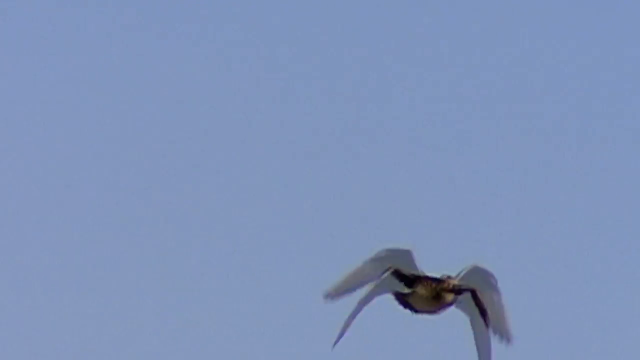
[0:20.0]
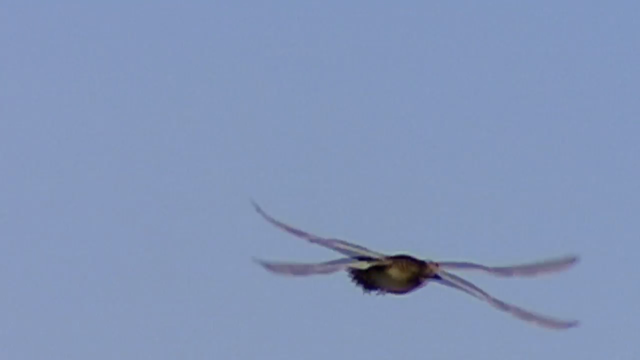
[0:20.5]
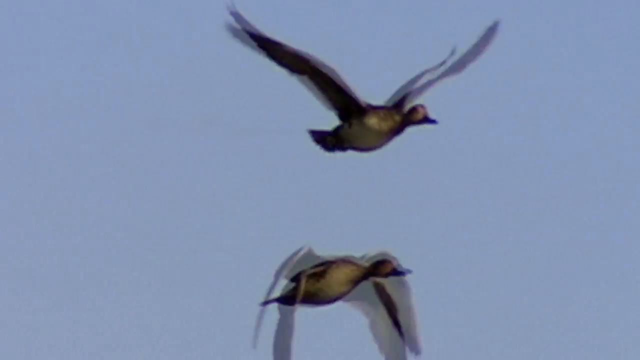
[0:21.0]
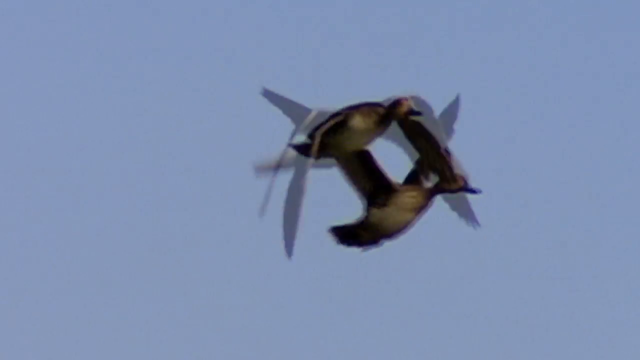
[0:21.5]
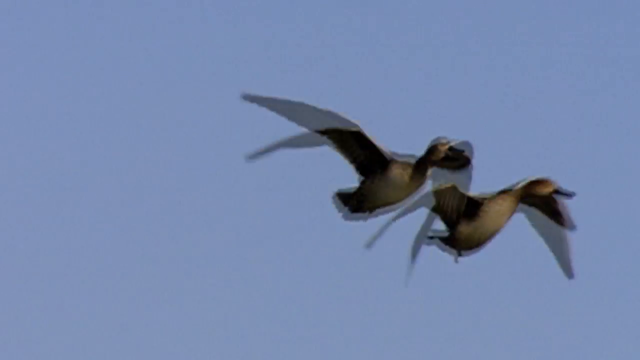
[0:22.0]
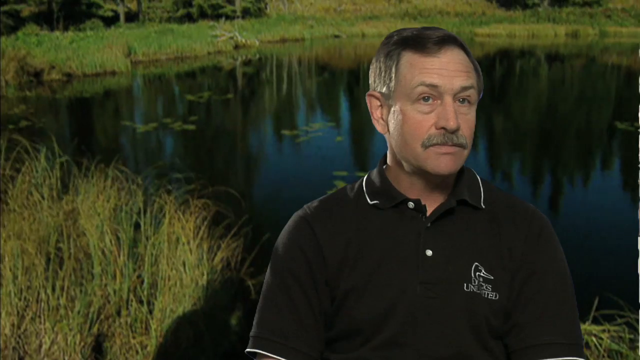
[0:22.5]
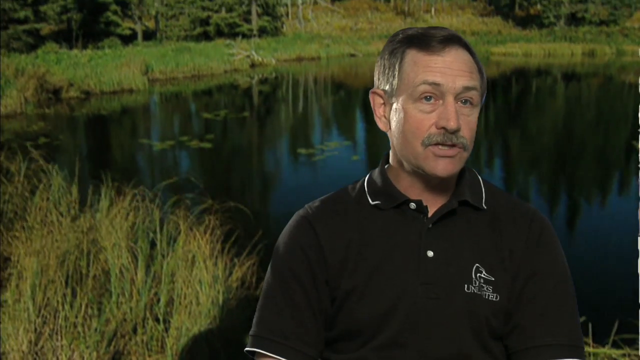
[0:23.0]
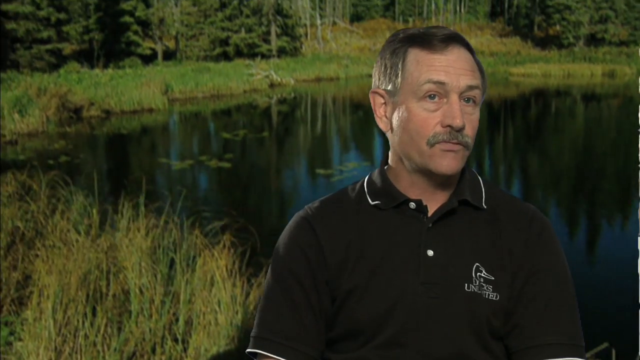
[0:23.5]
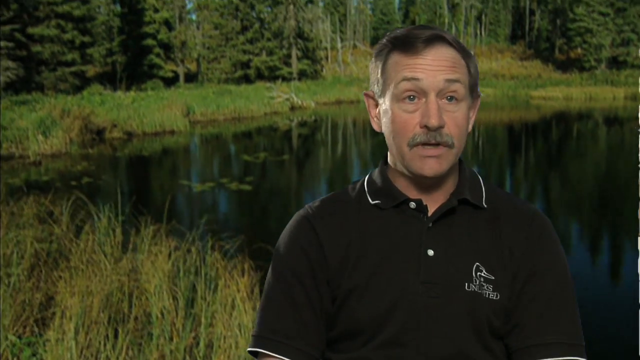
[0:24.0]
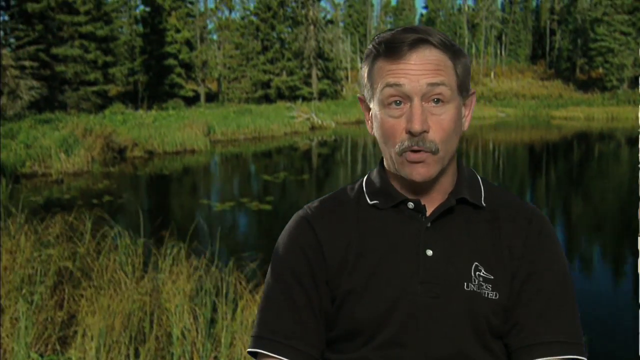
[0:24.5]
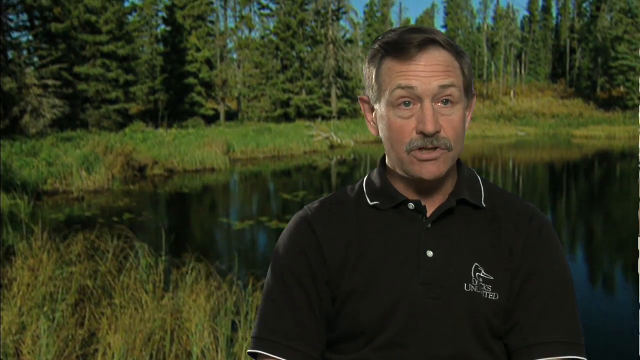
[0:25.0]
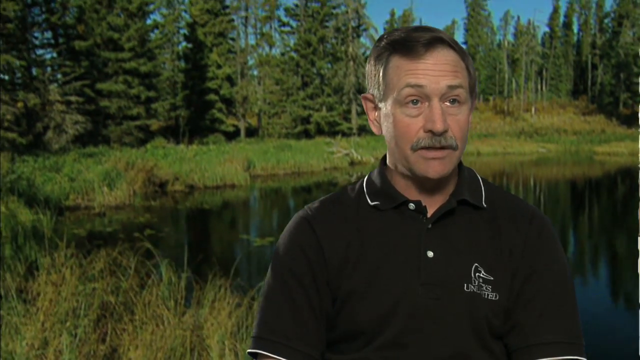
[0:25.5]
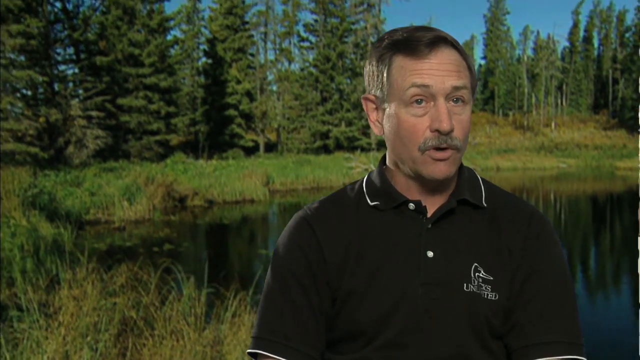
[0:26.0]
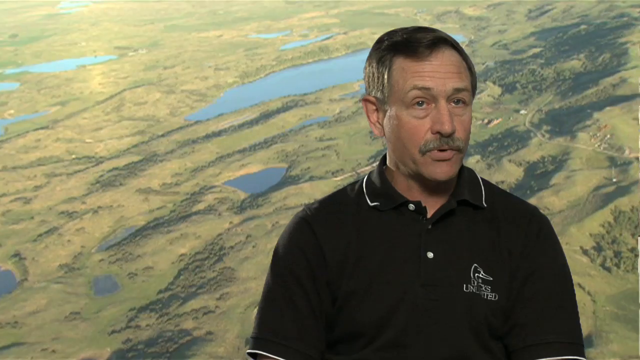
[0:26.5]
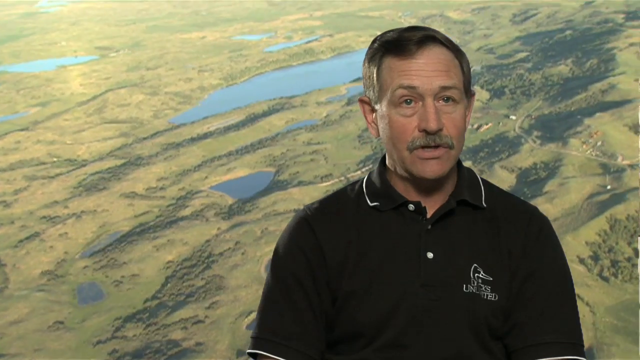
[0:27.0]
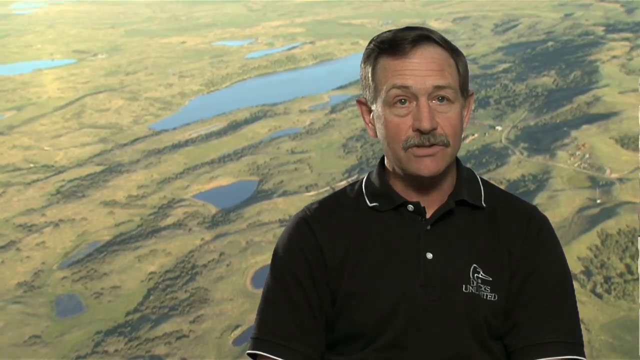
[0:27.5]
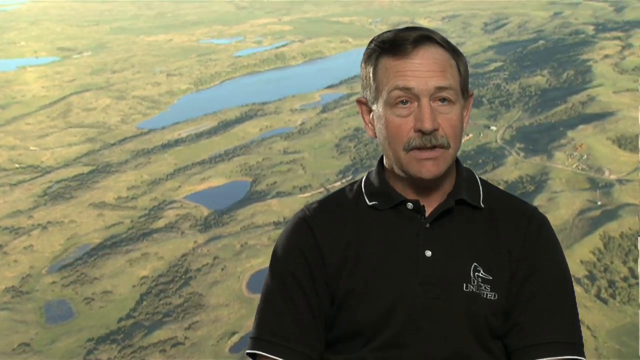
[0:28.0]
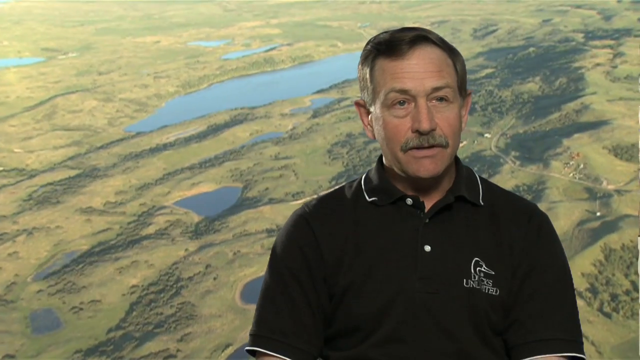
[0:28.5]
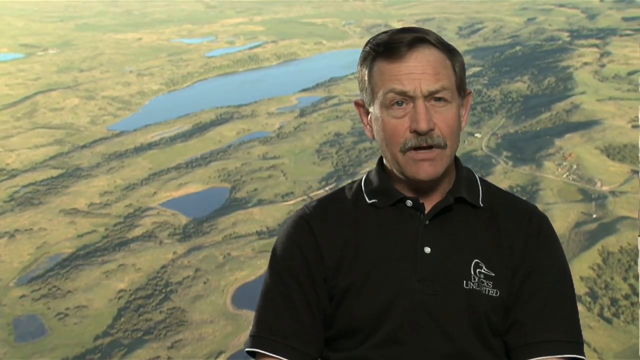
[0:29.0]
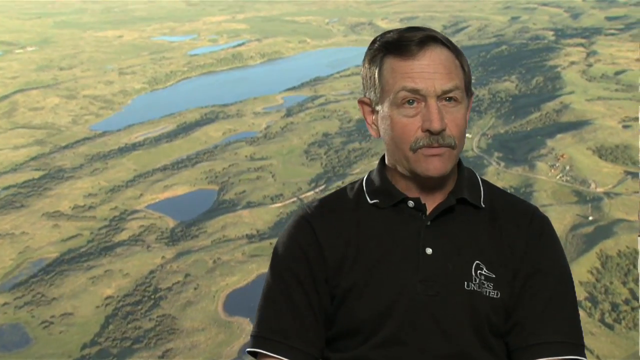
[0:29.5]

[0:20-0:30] A picture of a marsh surrounded by lush green forests fills the background, overlapped with the man in the black Ducks Unlimited polo, who speaks directly at the camera. The camera then turns, or the background changes, to a bird's-eye view of what looks like a valley of some sort with ponds scattered throughout. A larger body of water is toward the upper left-middle of the screen, and five smaller ponds are scattered in the same area. The camera begins to shake, as if possibly filmed from a helicopter.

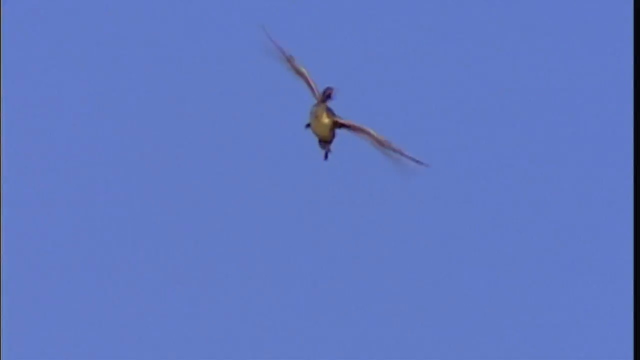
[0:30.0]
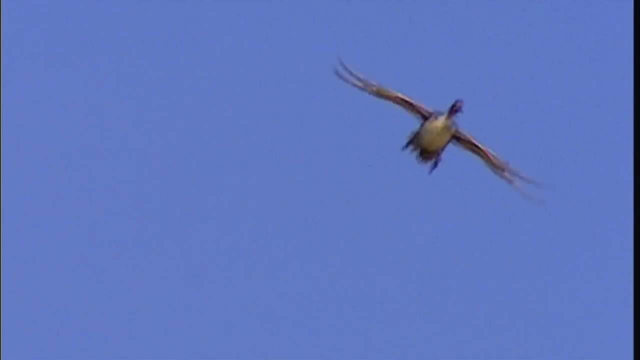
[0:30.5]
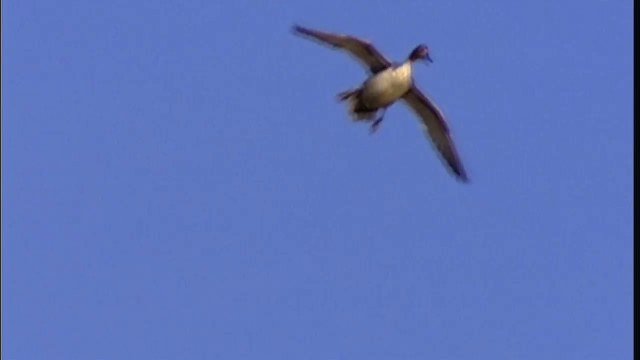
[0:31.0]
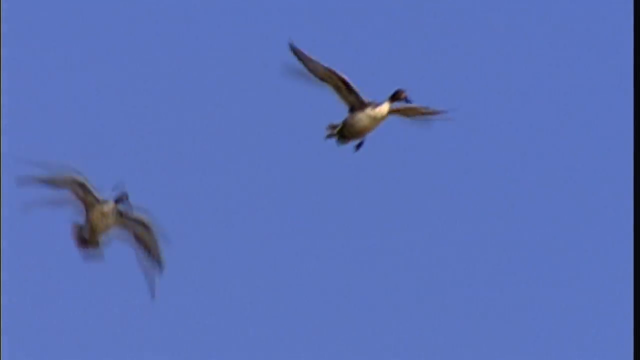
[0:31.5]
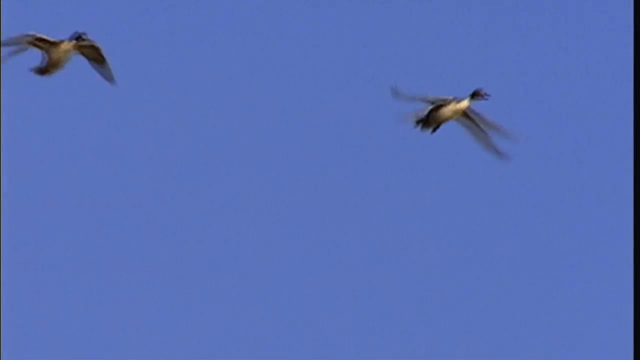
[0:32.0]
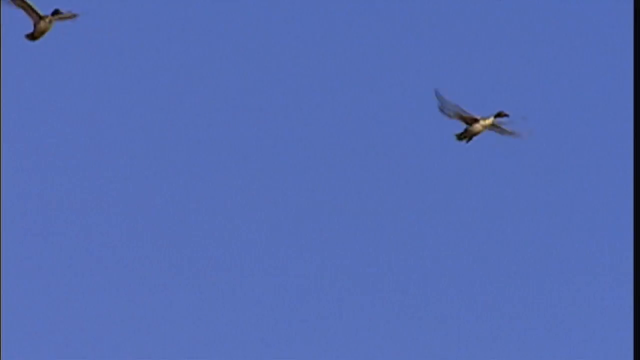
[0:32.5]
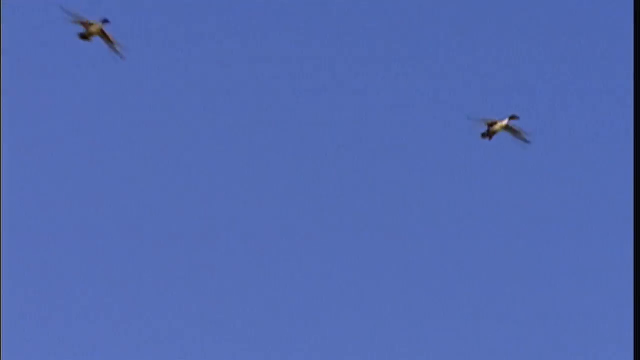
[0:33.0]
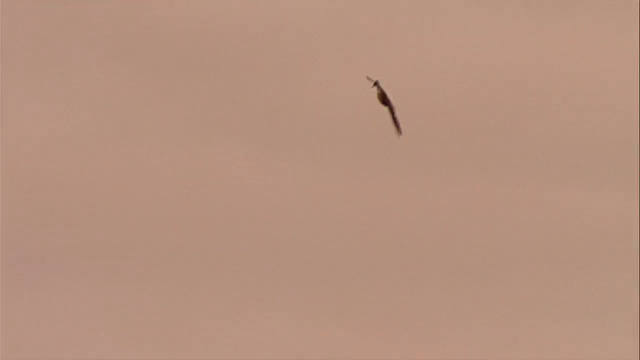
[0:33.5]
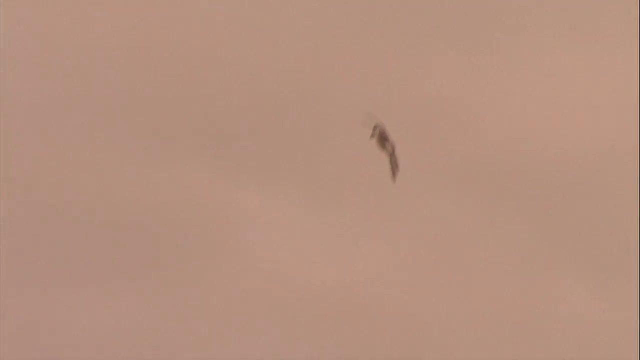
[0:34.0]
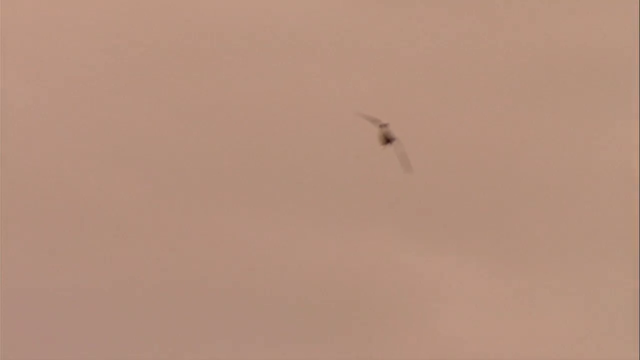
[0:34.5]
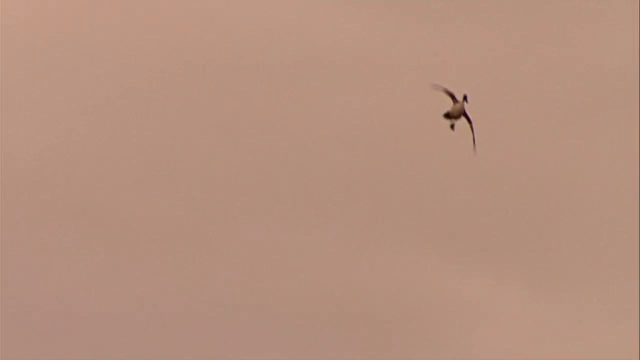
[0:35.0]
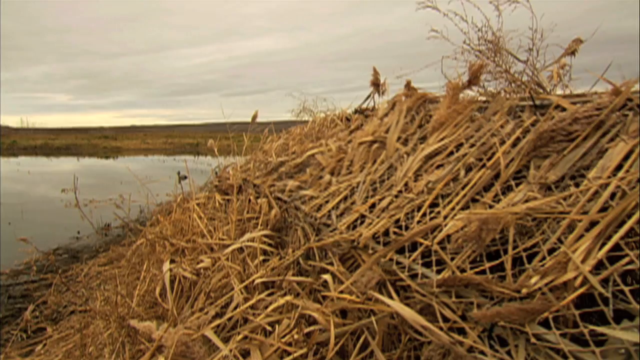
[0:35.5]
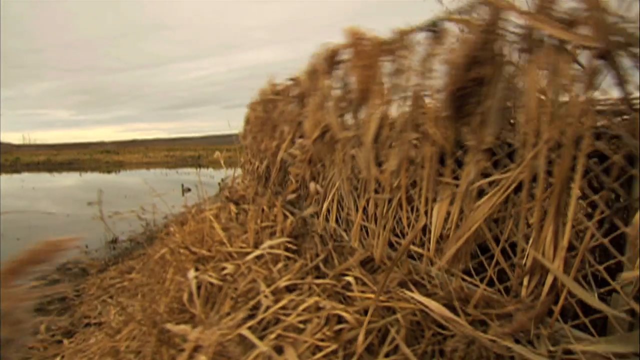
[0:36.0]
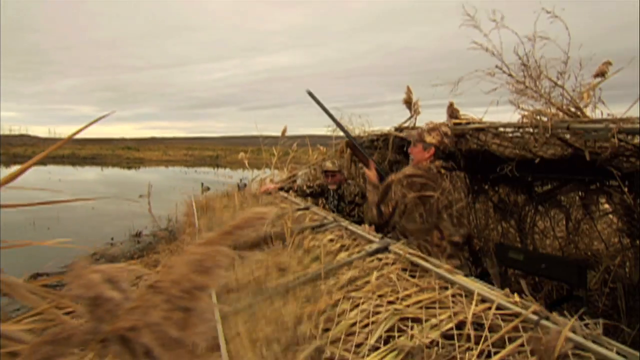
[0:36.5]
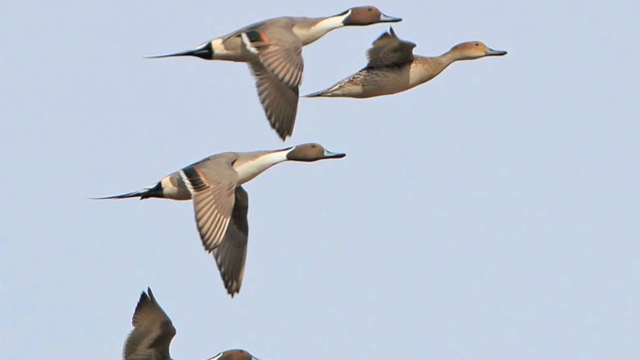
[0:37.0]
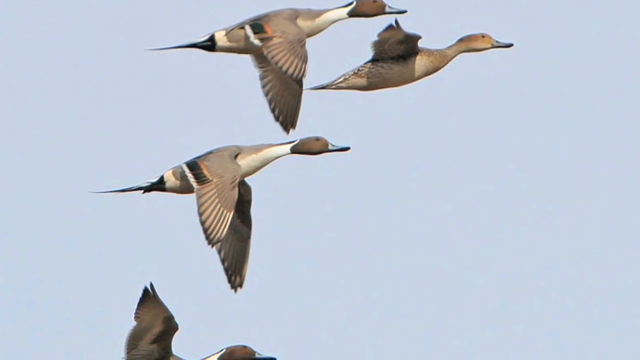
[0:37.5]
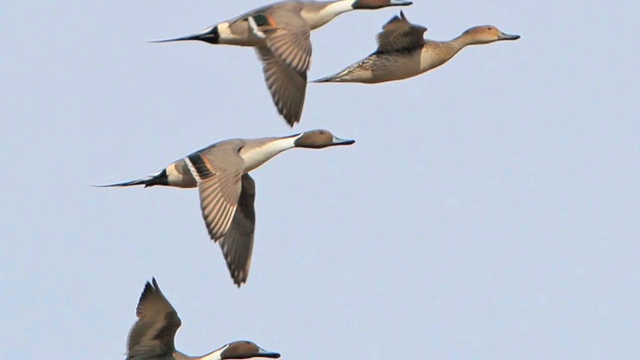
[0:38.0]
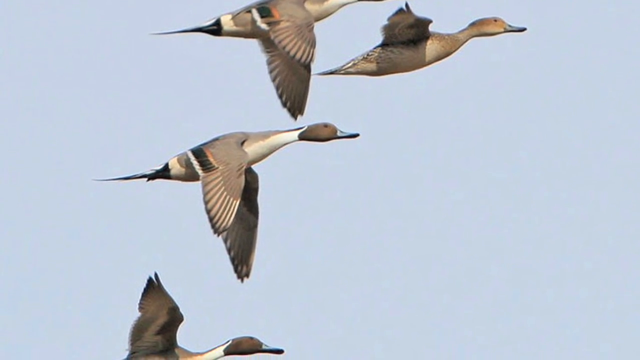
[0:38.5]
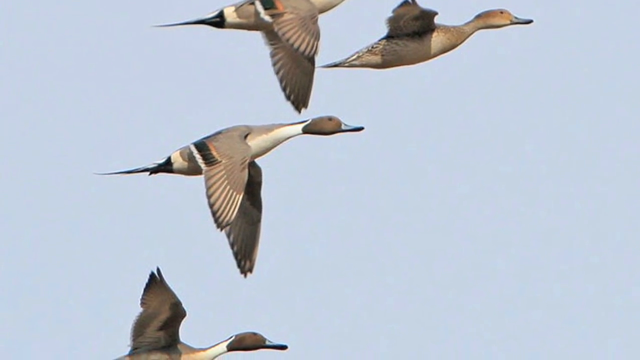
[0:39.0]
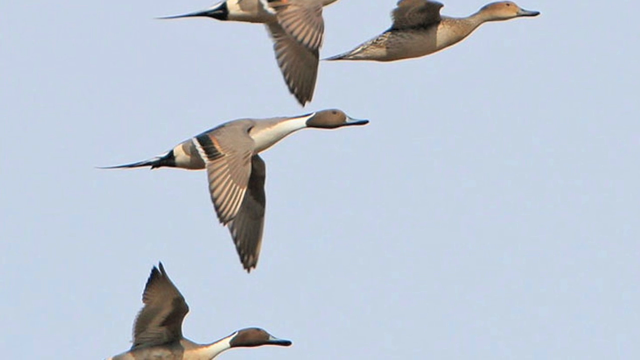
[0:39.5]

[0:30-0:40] Against a blue background, a goose flies toward the camera and is joined by a second goose that stays in the left-hand corner. This is replaced by another goose flying through the air on a smokier-style background with red highlights. The video then jumps to two men jumping in what looks like a duck blind crudely made of chain link fence with straw over the top. As they come out, they face the air with shotguns in hand, toward the ducks in the sky. This is replaced by an image of four ducks on the blue sky background.